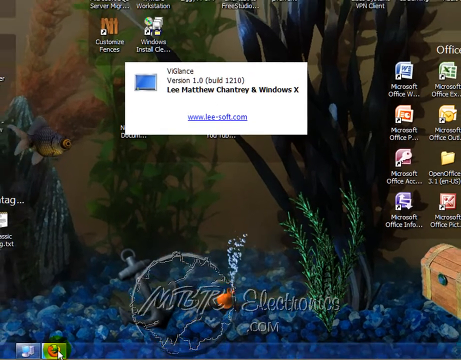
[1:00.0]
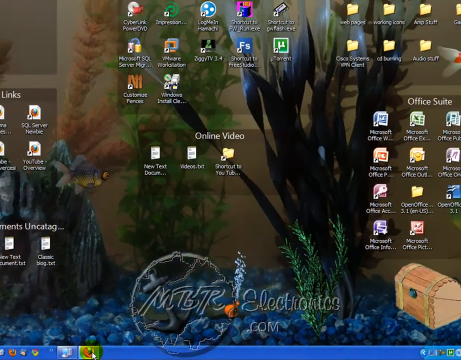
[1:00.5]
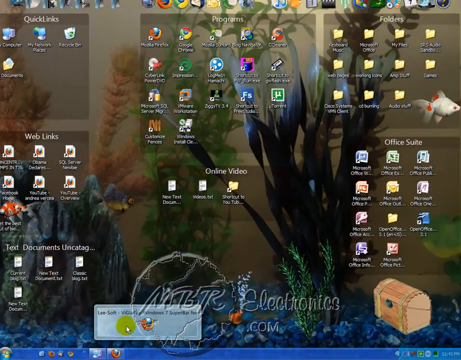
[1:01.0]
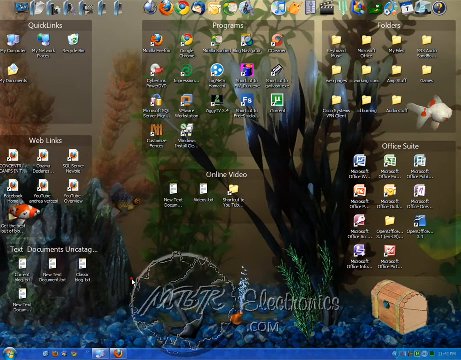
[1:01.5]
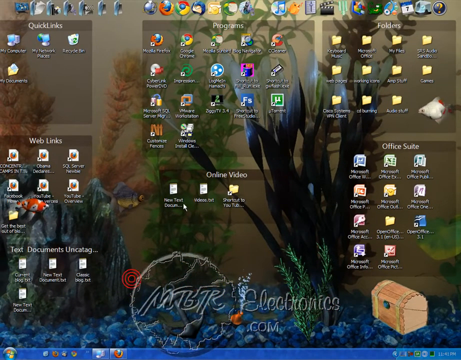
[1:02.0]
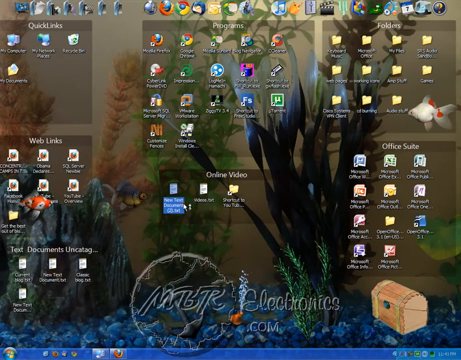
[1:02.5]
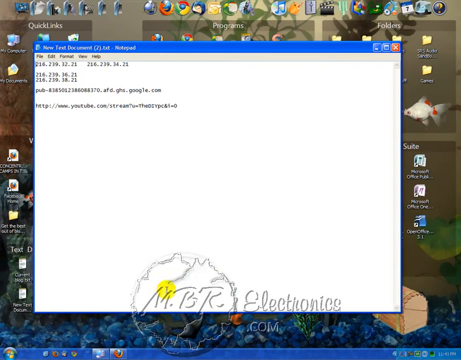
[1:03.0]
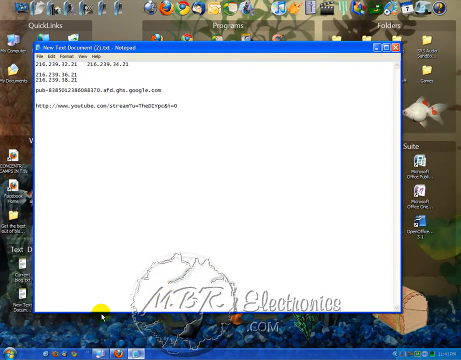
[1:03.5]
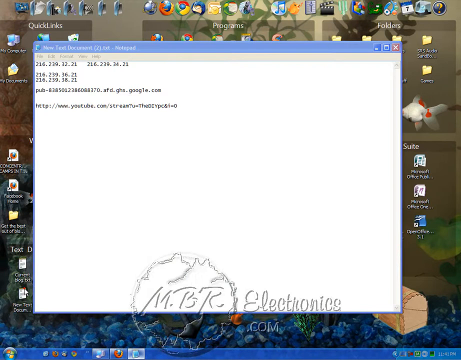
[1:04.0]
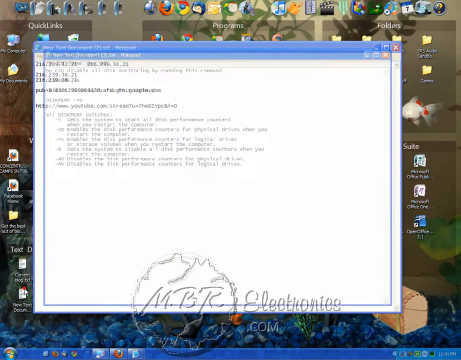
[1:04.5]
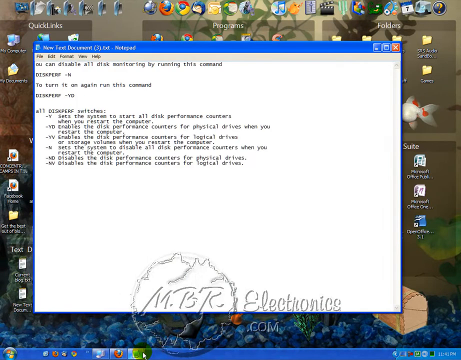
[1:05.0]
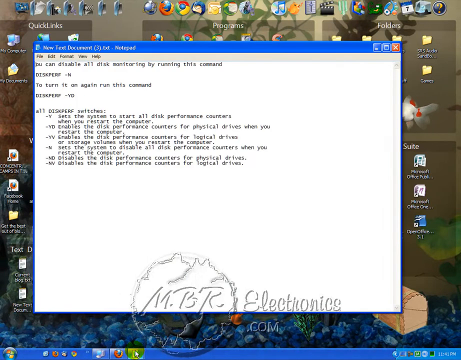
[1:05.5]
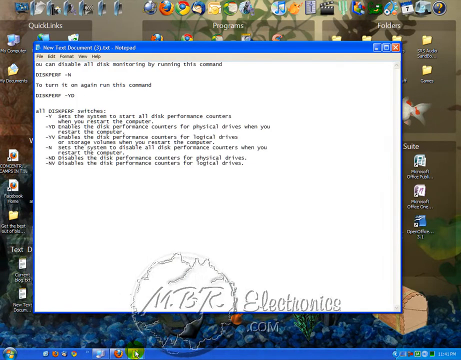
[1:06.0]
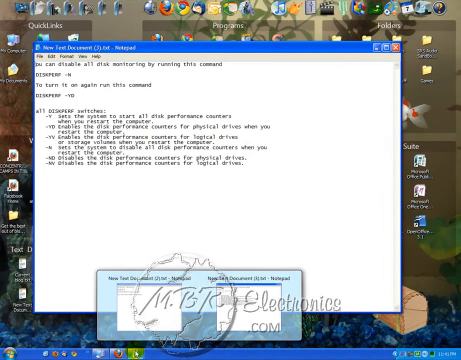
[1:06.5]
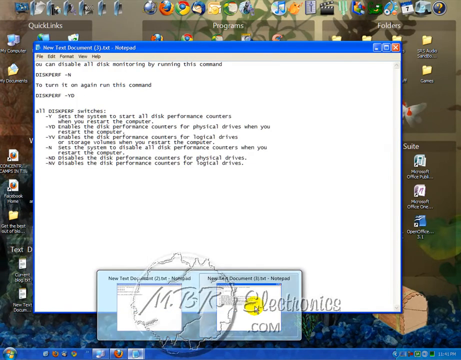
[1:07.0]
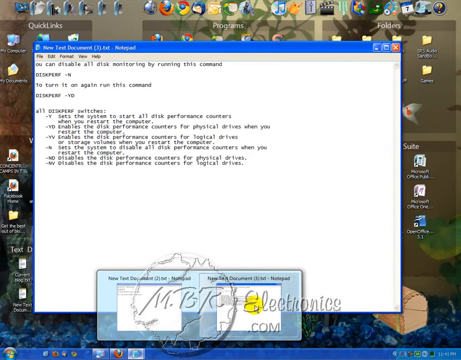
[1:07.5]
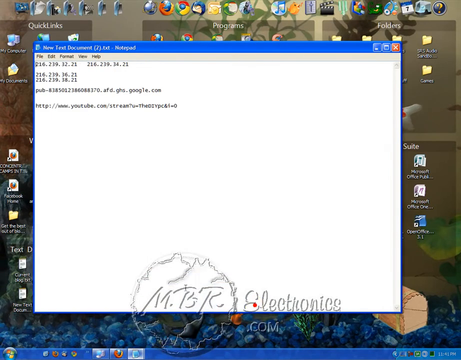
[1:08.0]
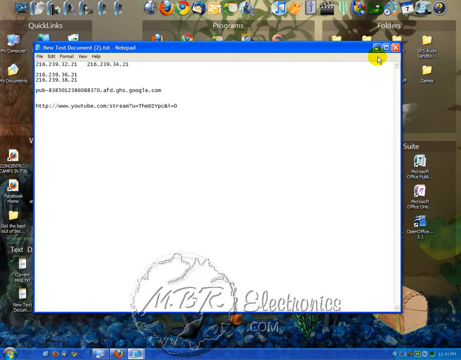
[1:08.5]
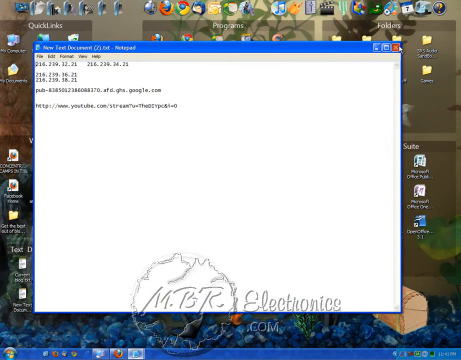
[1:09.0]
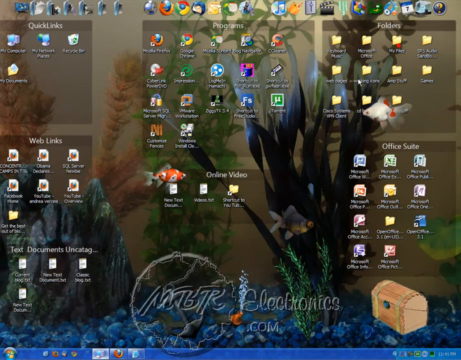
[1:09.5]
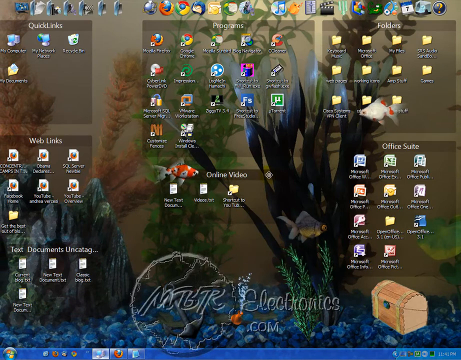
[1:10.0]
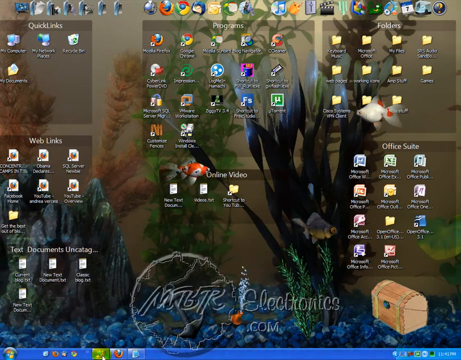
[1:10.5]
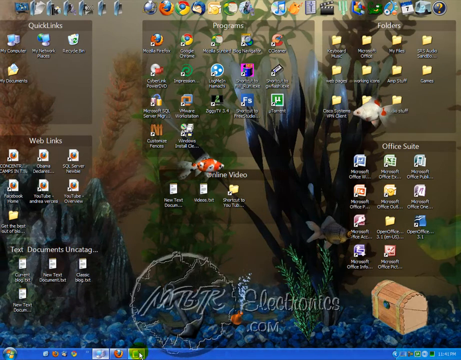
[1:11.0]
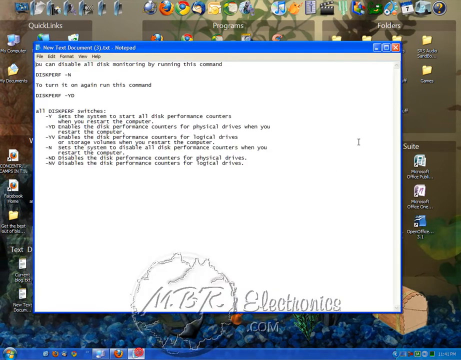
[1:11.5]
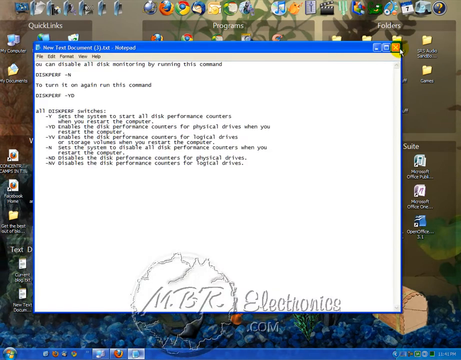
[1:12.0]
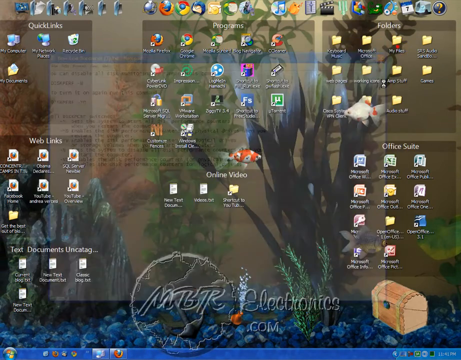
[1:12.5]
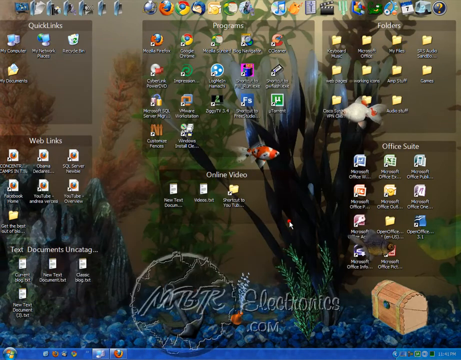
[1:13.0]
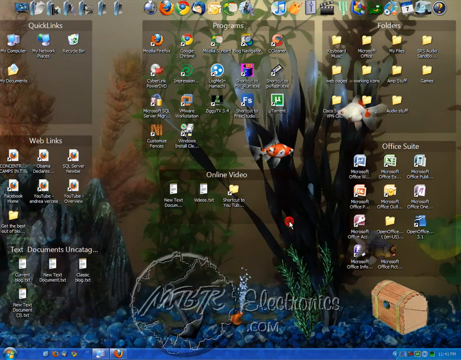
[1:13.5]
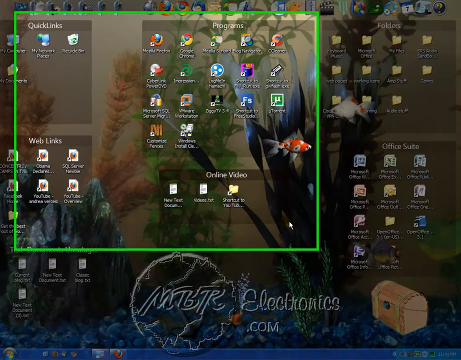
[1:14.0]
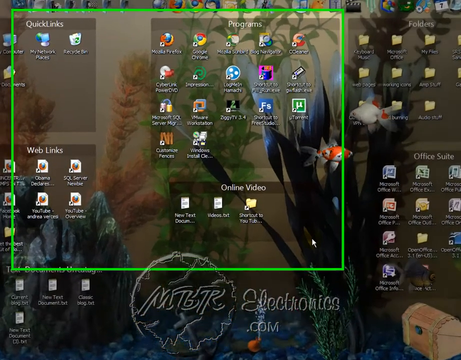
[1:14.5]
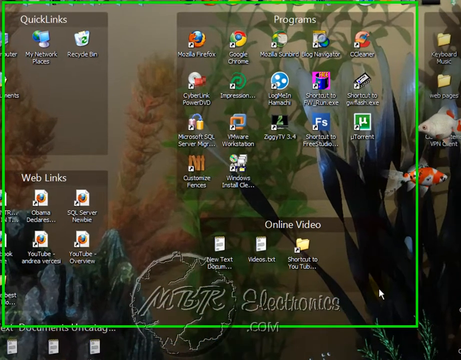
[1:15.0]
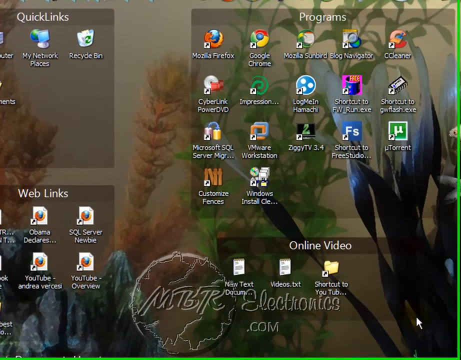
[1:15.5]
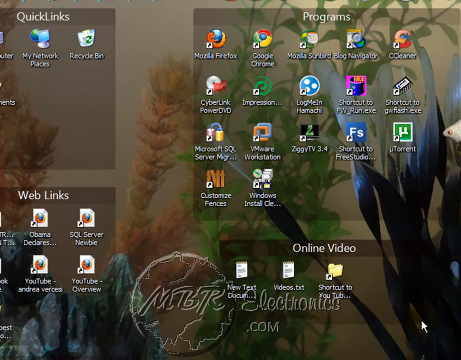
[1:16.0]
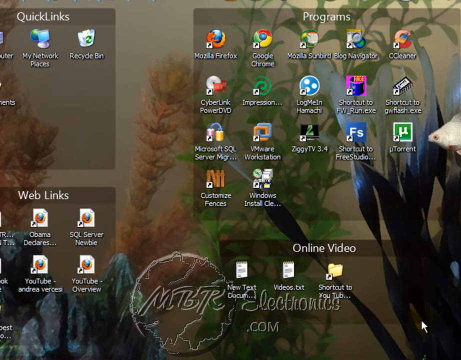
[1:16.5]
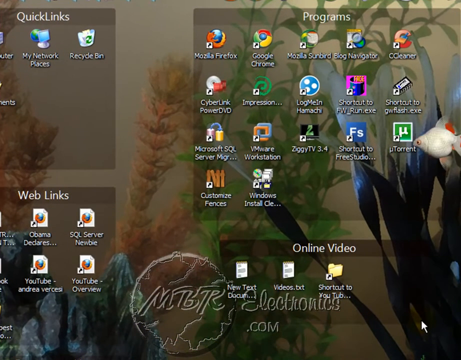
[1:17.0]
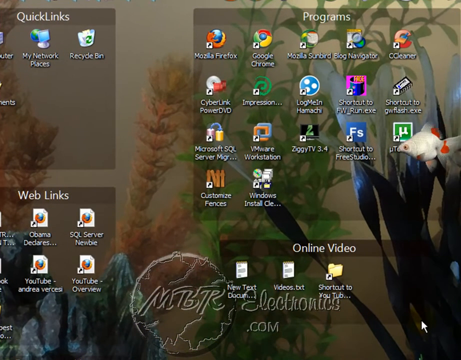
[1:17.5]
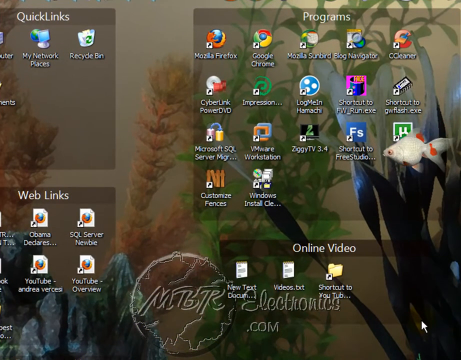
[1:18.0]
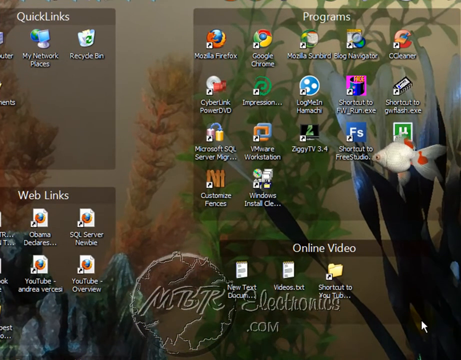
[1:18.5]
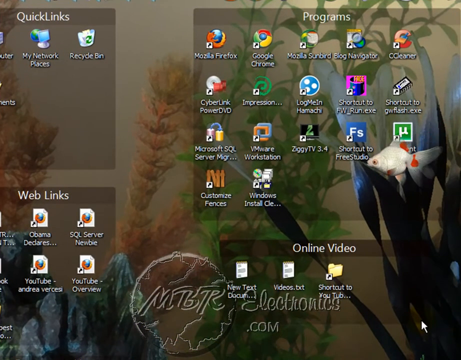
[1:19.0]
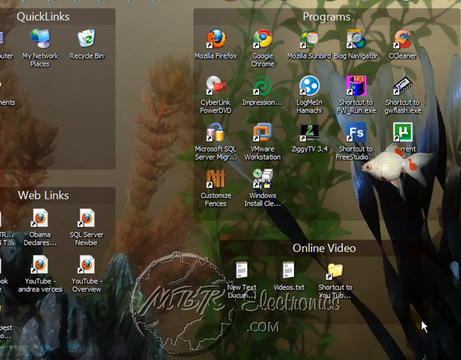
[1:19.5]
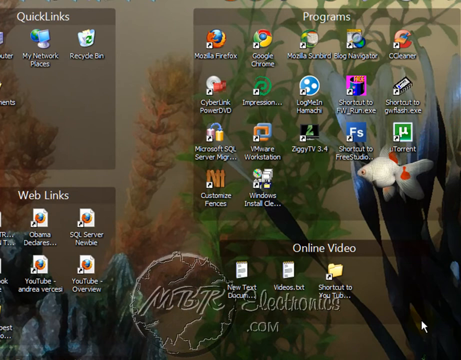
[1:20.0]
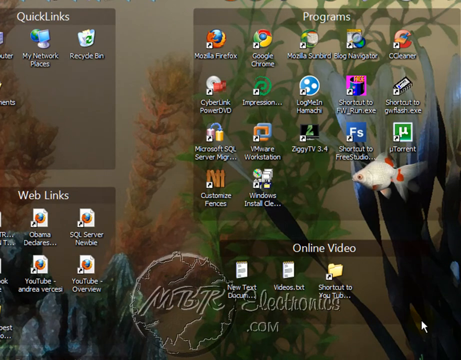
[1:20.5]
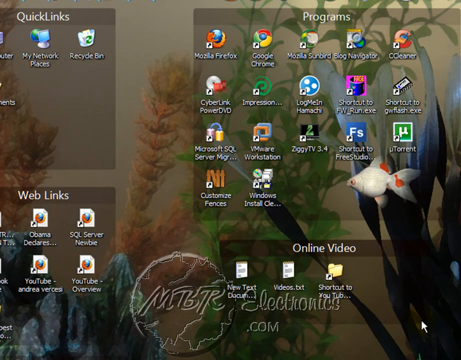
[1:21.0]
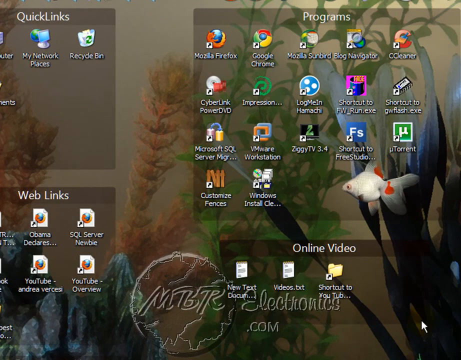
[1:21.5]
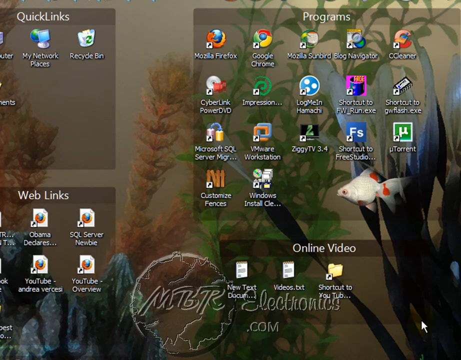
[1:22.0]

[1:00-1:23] The user continues to navigate through the screen of his laptop. The video quality is now better than before. He is downloading something of version 1 of Windows X. Icons continue to be displayed, including Microsoft Office icons, online videos, and uncategorized documents. The live wallpaper continues to be displayed with features of different colors, with a trunk sunk down and plants visible. The quality is still not high, but some small words that were not legible earlier are now more visible and can be read.